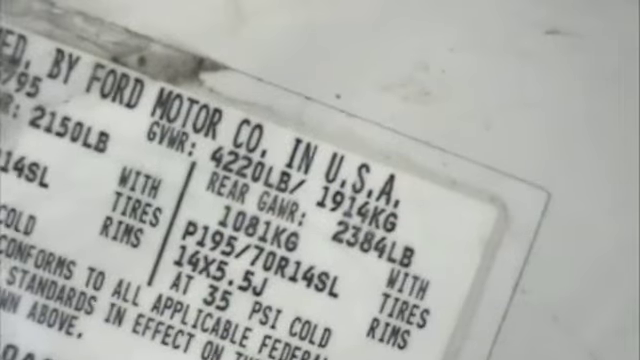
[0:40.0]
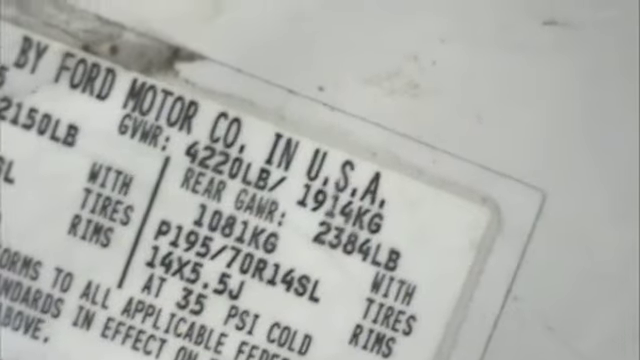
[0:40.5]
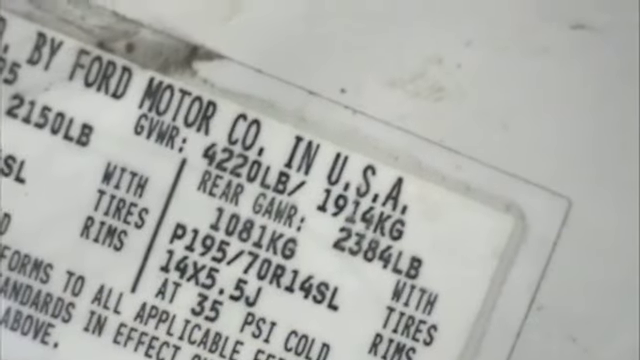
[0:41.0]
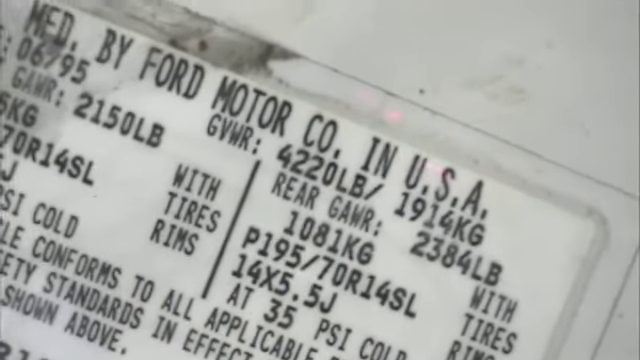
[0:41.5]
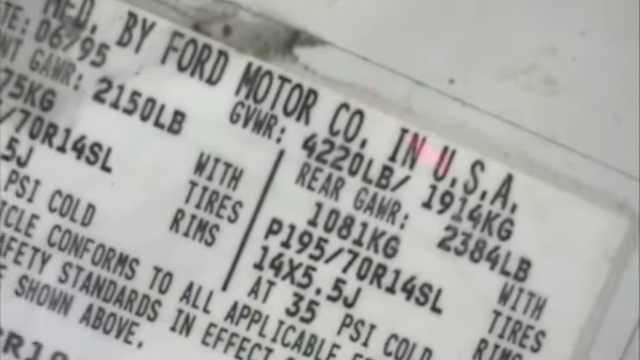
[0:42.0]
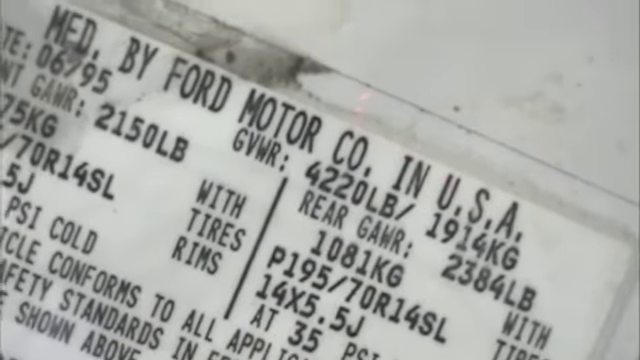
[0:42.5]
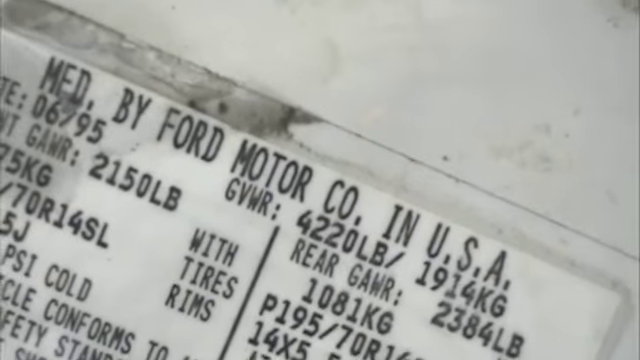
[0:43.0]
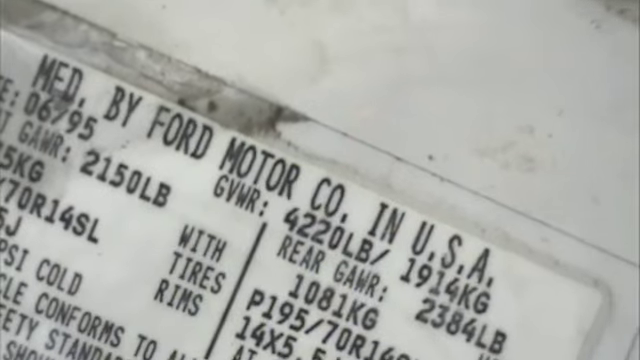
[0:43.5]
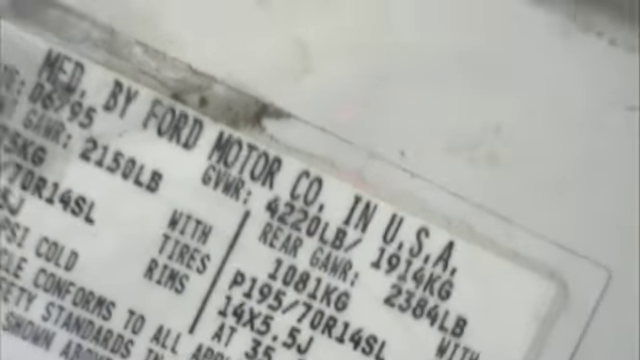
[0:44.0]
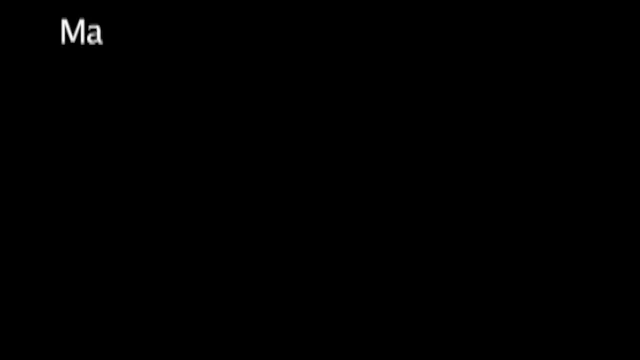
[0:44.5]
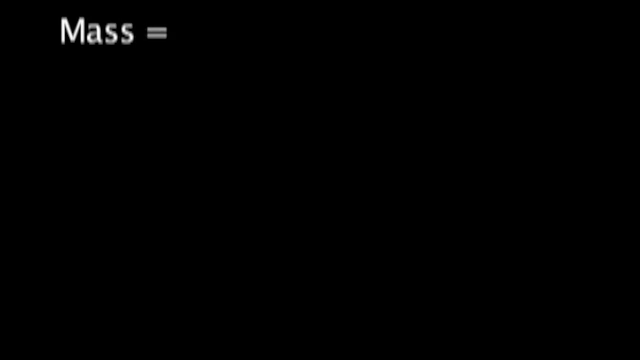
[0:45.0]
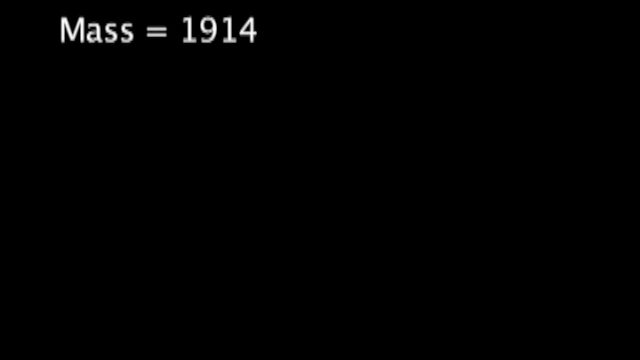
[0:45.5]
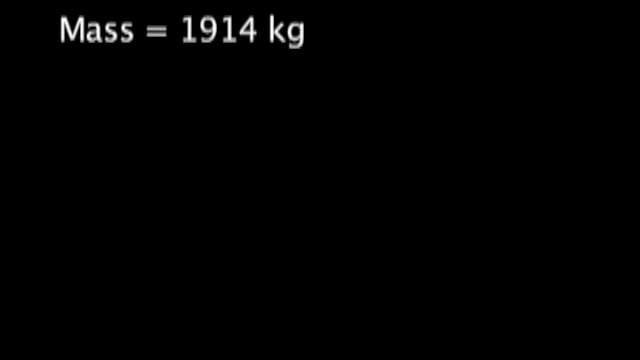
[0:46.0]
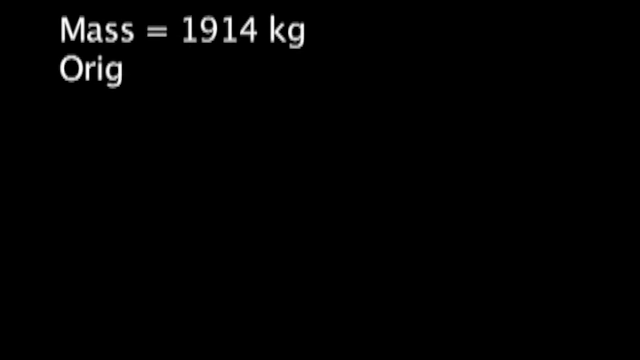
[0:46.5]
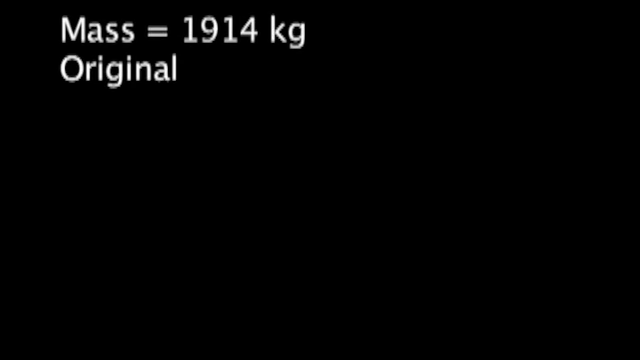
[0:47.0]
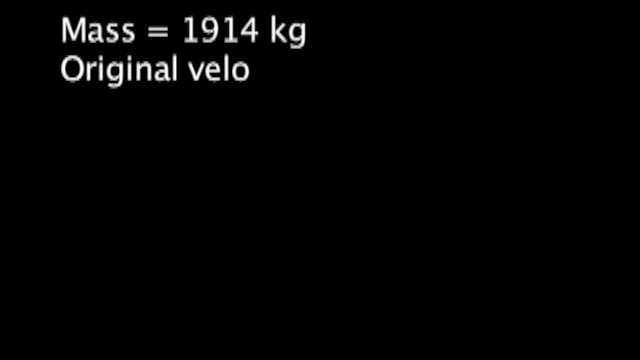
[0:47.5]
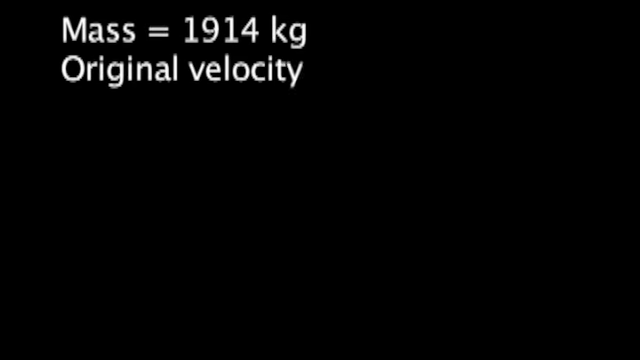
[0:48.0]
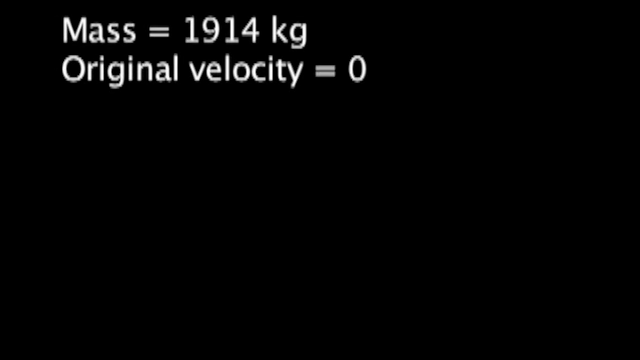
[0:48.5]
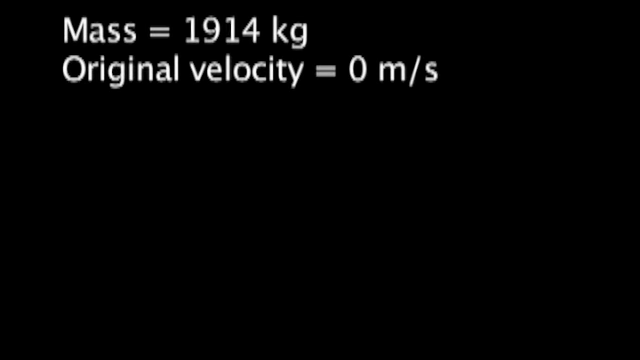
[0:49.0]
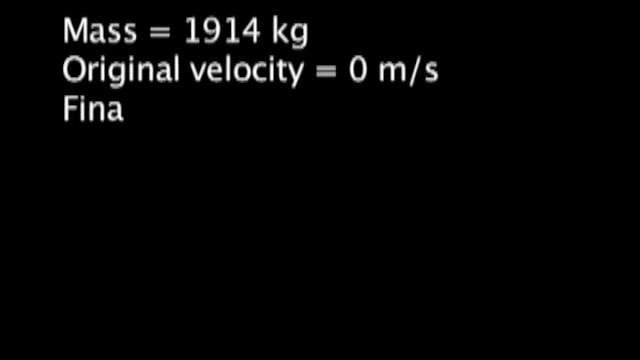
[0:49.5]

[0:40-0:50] The view stays zoomed in on the sticker inside the white truck's door that lists information about the vehicle. The top portion now clearly reads "MFD. by Ford Motor Co. in USA," along with various other numbers and letters. A section reads "With Tires Rims," and the truck is listed as 4,220 pounds or 1,914 kg. After a few more moments on the sticker, a black screen appears, on which someone apparently begins to type. They type "MASS = 1,914 kg," then on the next line "Original Velocity = 0M/S." On the third line they begin typing the word "Final" followed by the lowercase letters "velo."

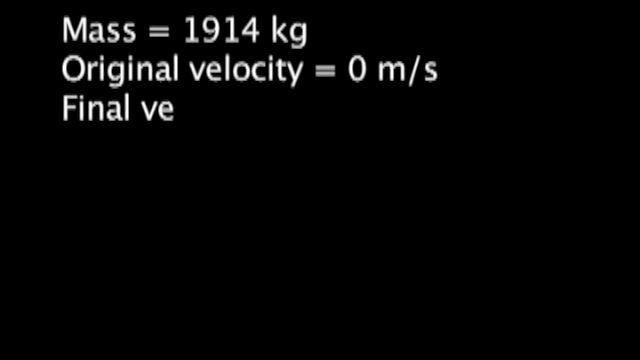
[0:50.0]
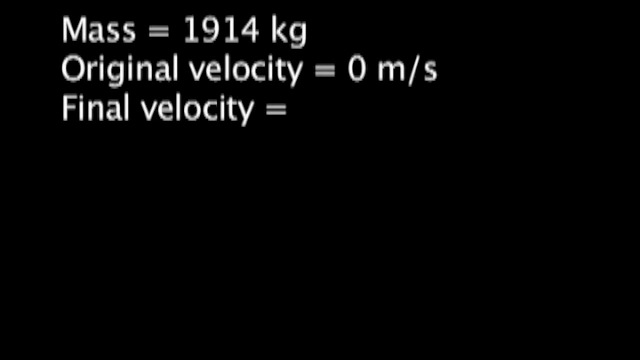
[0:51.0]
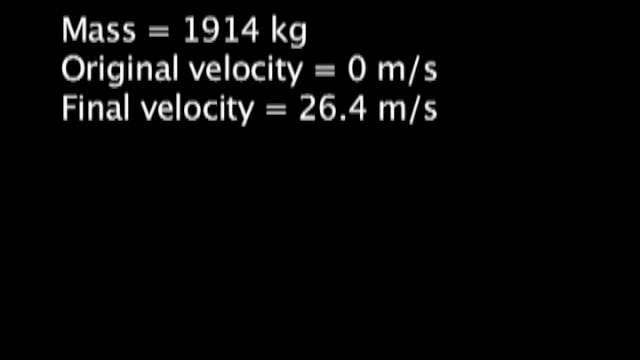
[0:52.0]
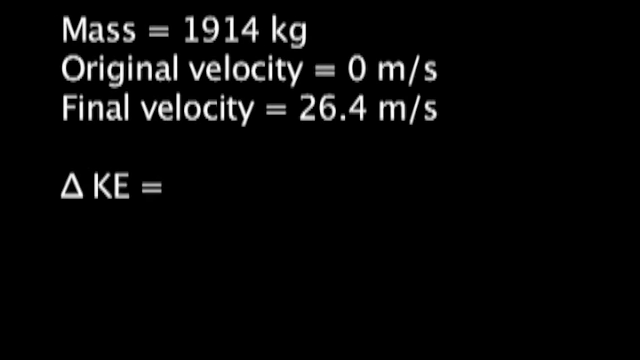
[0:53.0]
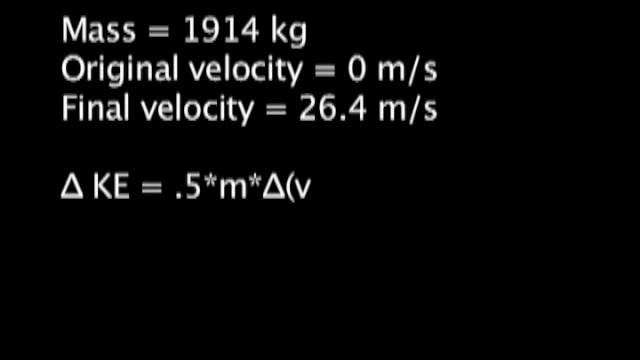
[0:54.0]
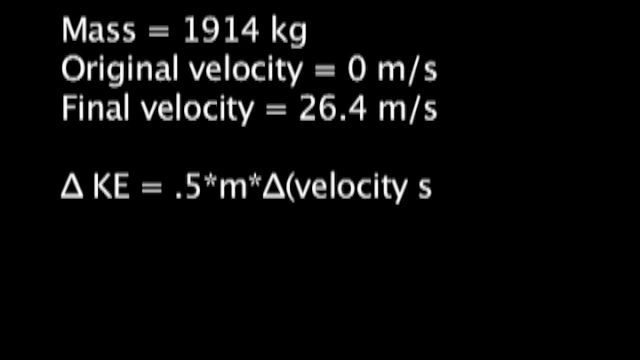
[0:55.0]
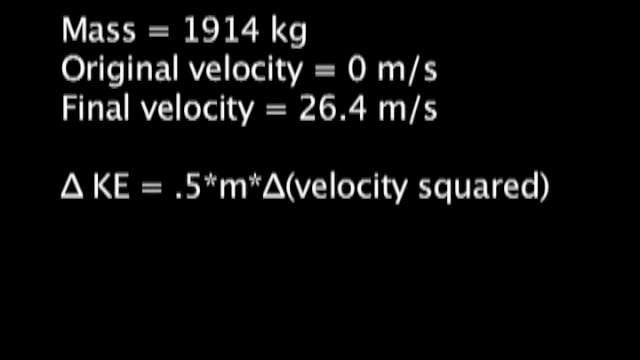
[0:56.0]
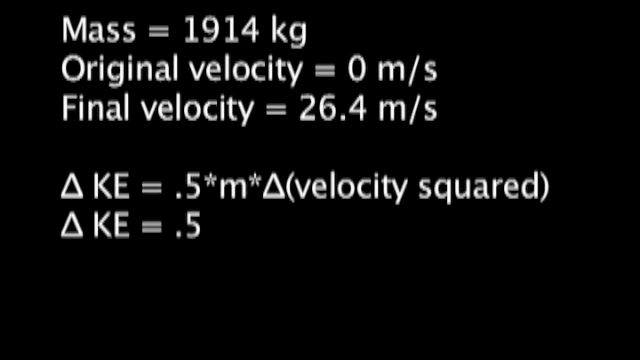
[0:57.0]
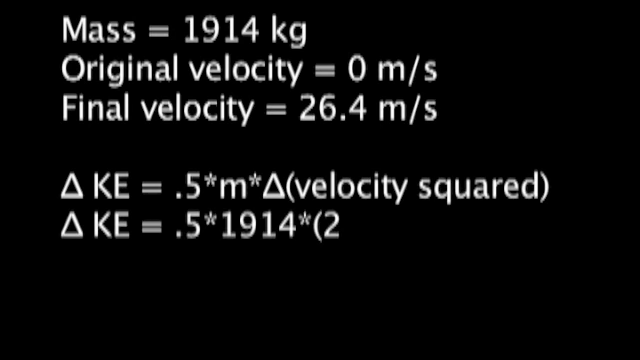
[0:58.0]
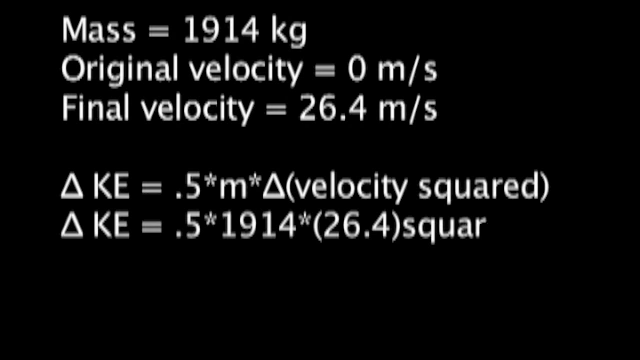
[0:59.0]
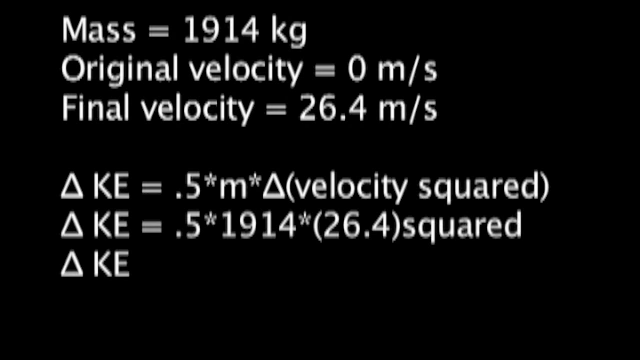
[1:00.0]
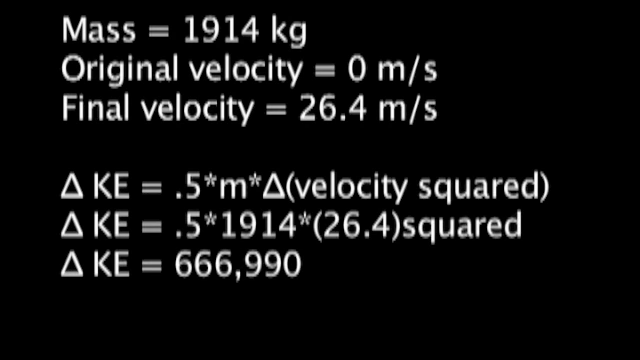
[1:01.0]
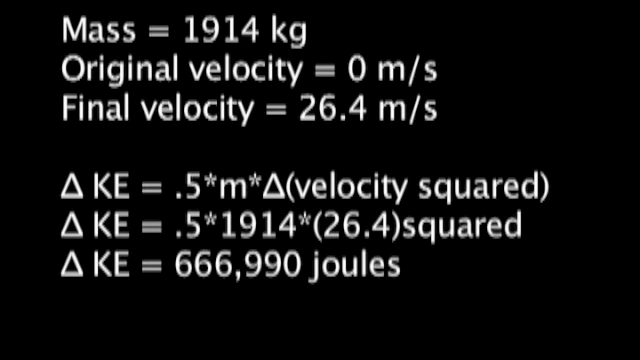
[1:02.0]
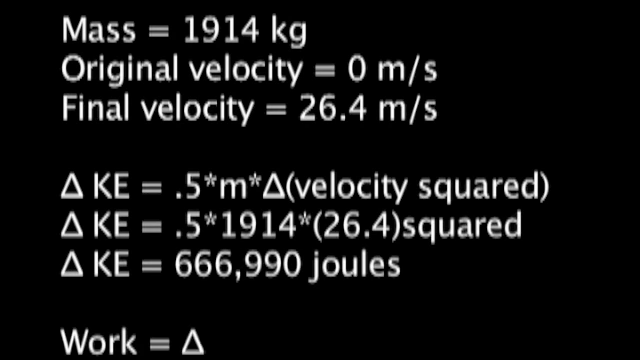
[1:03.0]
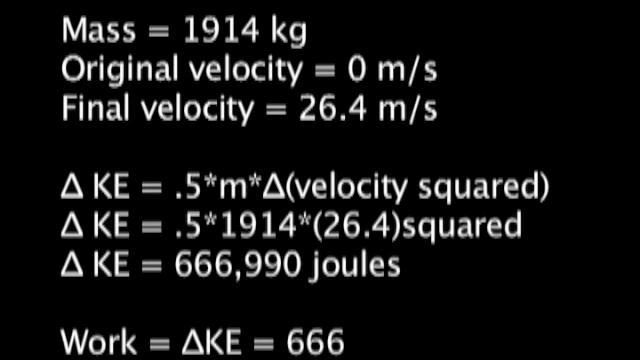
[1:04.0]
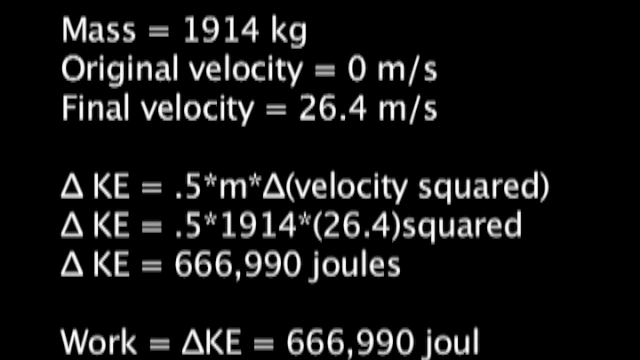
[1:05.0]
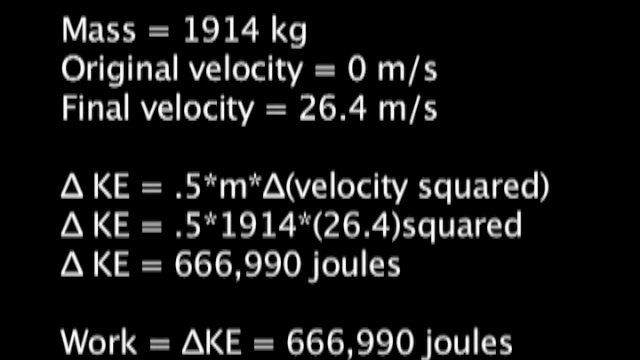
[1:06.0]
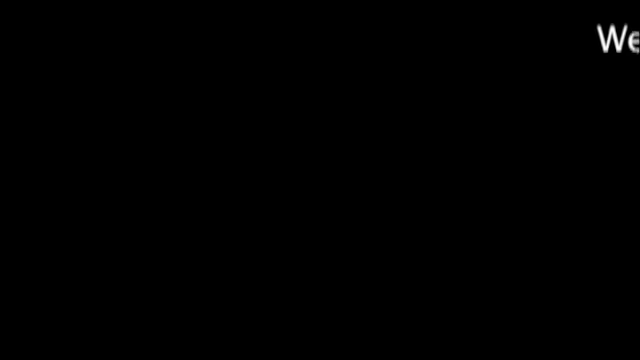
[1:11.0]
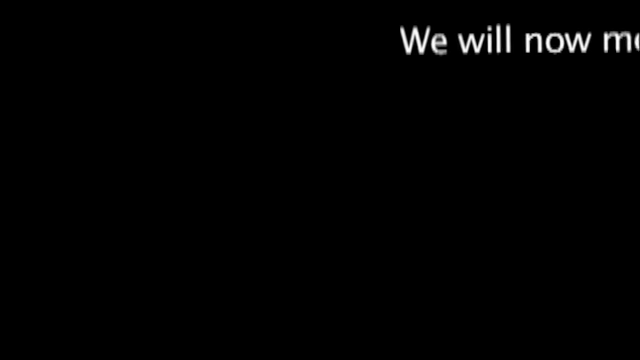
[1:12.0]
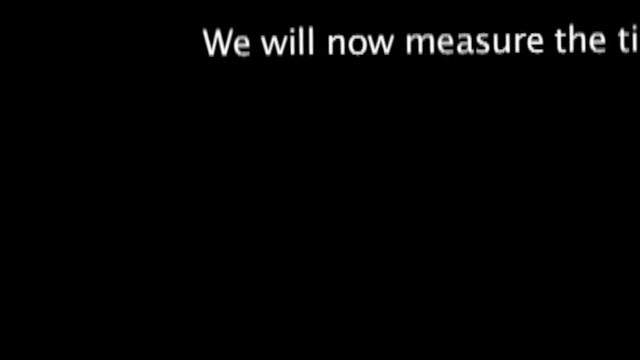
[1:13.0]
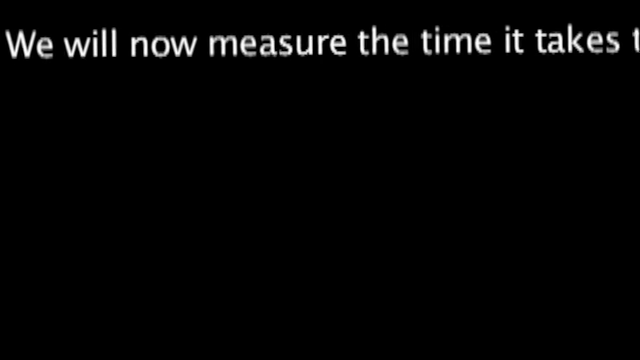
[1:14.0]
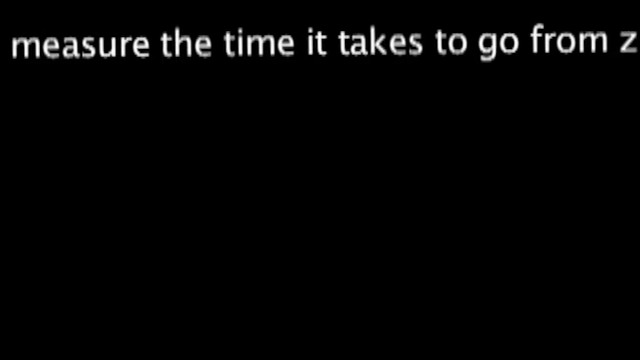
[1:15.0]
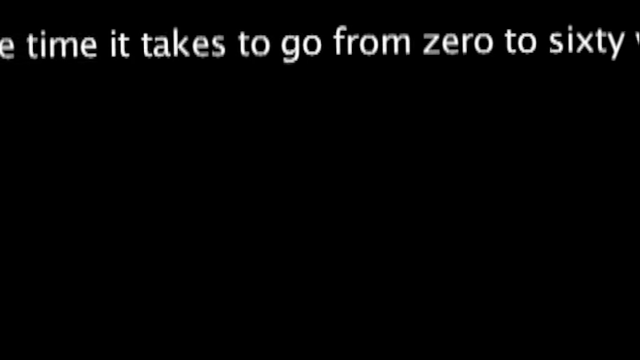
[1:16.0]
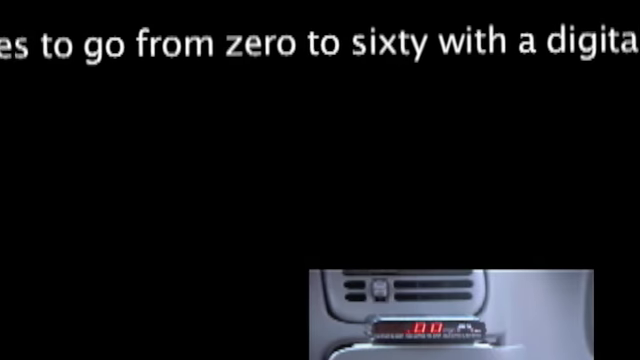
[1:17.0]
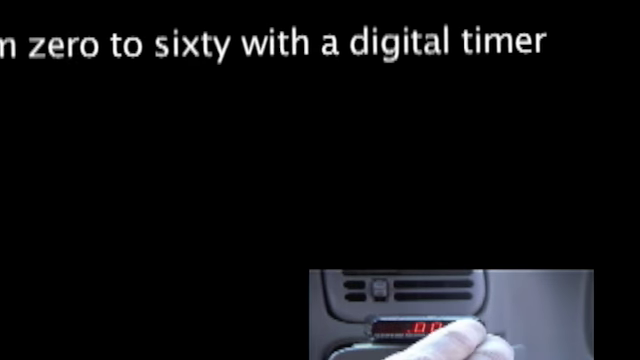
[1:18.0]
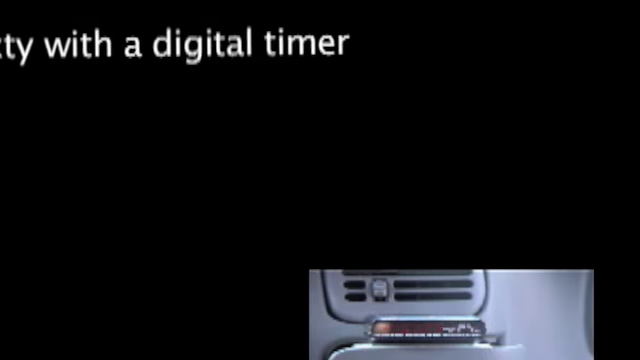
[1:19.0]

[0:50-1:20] The black screen shows "mass = 1914 kg" and "original velocity = 0 m/s," and the third line is finished, reading "final velocity = 26.4 m/s." A double space below is a small white triangle with a black center and the text "KE = 0.5*M*", an image of a triangle, and "(velocity squared)". Below that, another white triangle with a black center accompanies "KE = 0.5*1914*(26.4)" followed by an S and the word "squared." Below that, another small white triangle with a black center reads "KE = 666,990 joules." This appears to stay on screen for a few moments before a banner runs across a black screen reading "we will now measure the time it takes to go from 0 to 60 with a digital timer." A small video appears in the bottom right corner, which looks like it shows a car's air conditioning vent being filmed.